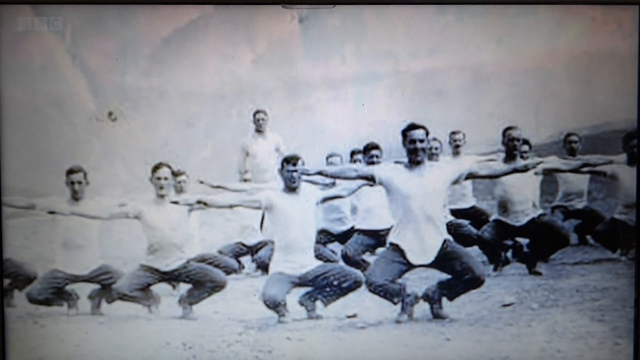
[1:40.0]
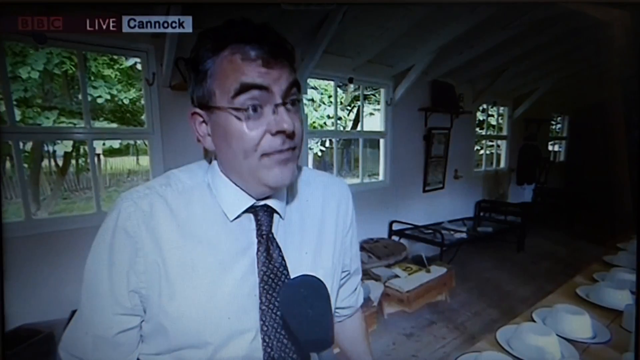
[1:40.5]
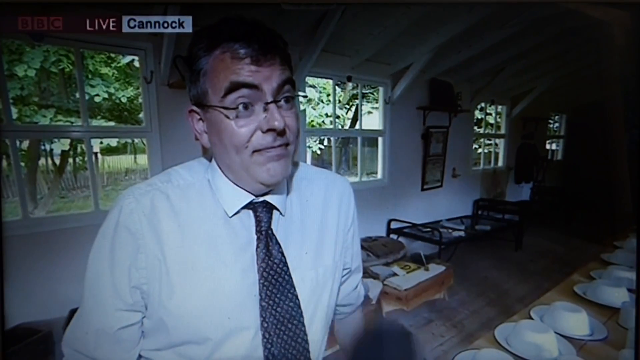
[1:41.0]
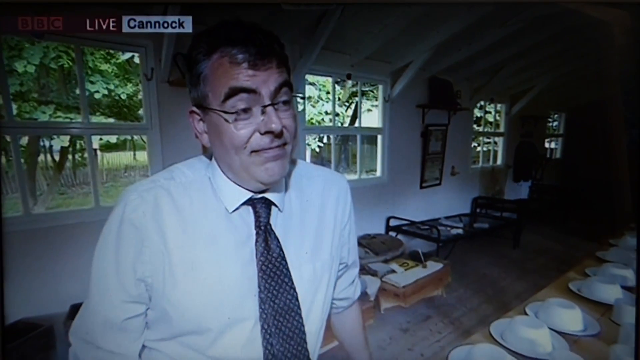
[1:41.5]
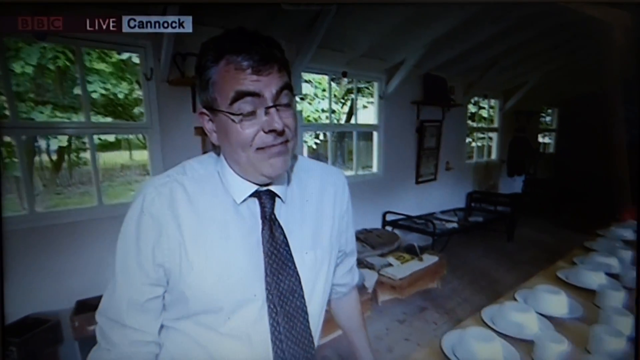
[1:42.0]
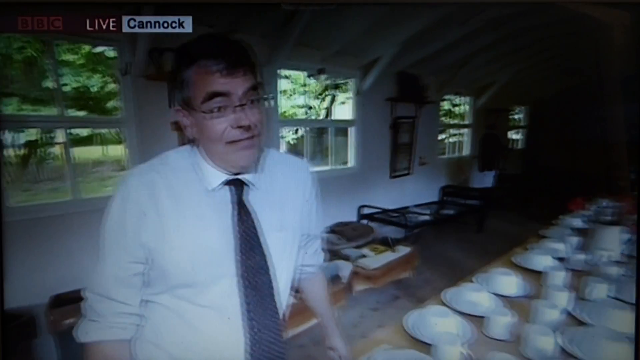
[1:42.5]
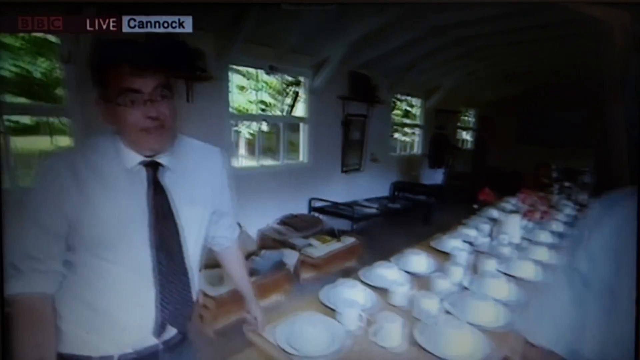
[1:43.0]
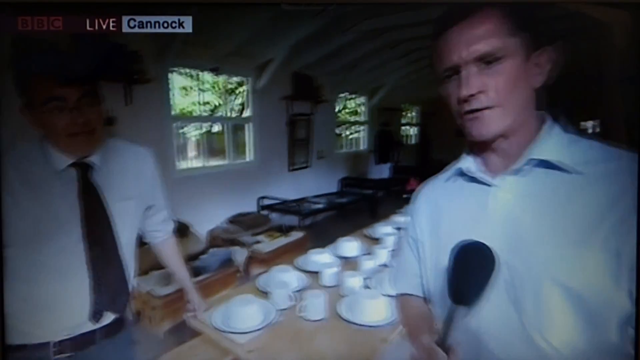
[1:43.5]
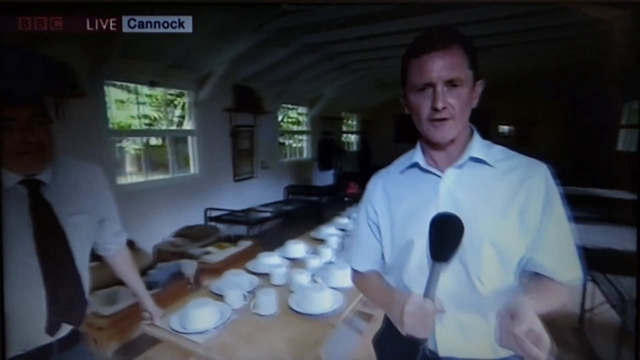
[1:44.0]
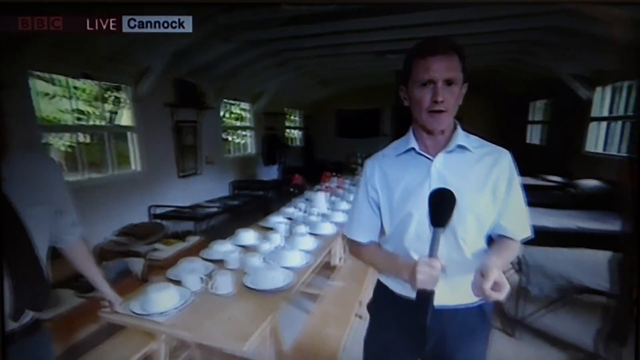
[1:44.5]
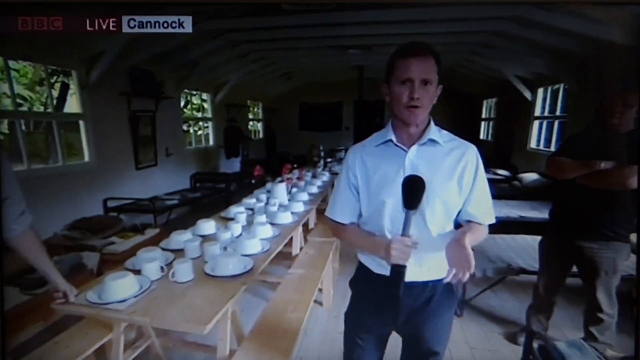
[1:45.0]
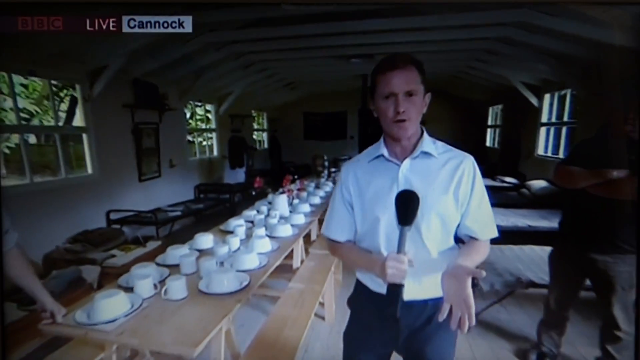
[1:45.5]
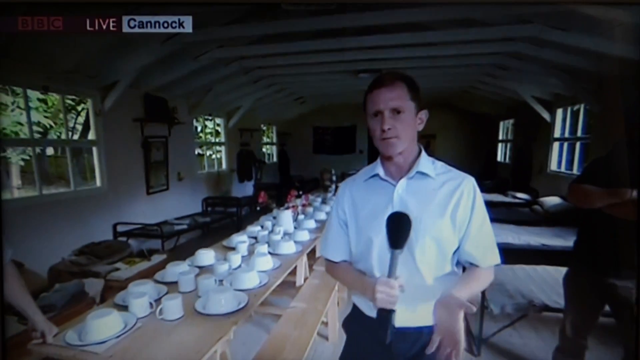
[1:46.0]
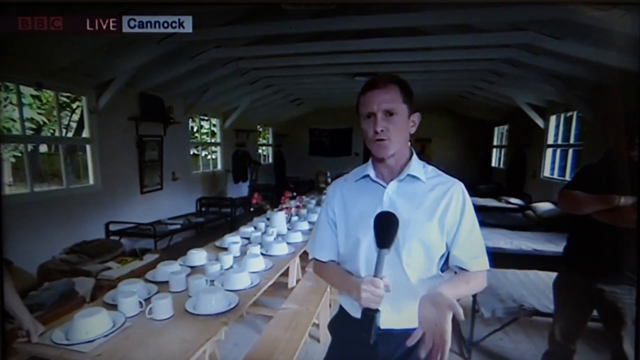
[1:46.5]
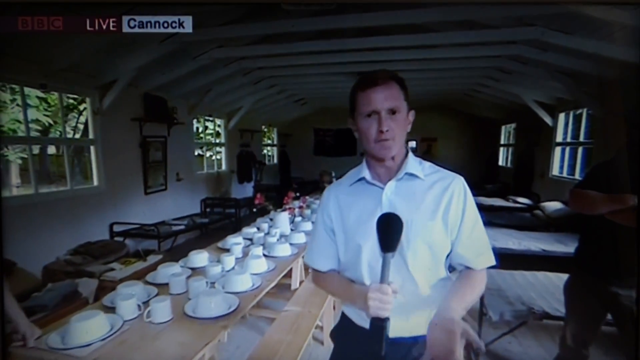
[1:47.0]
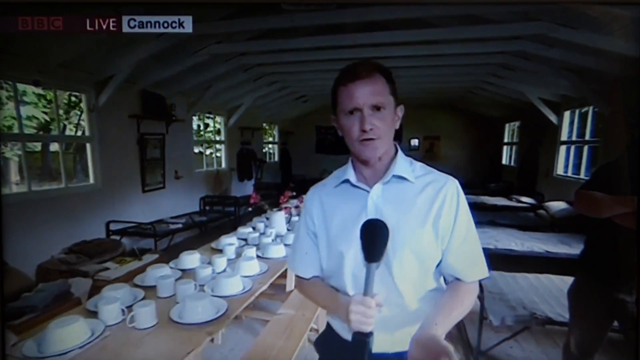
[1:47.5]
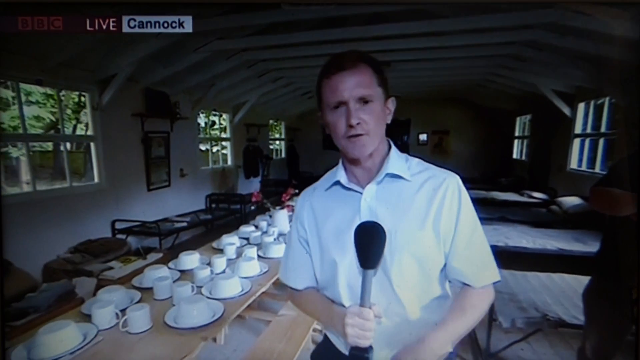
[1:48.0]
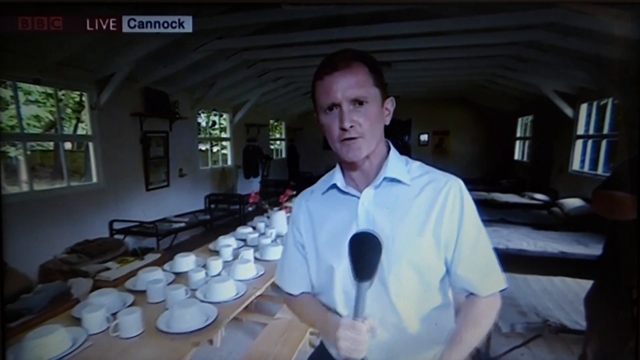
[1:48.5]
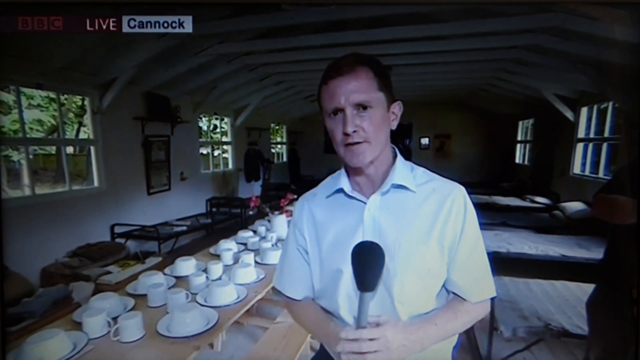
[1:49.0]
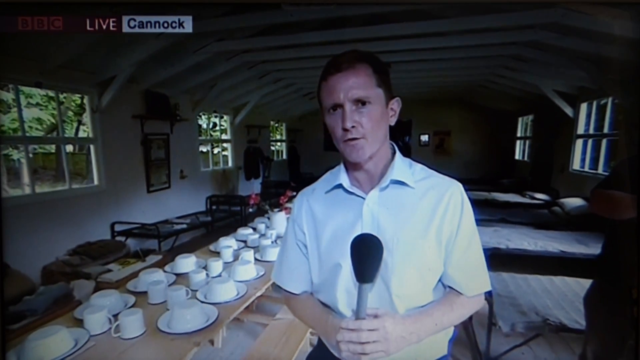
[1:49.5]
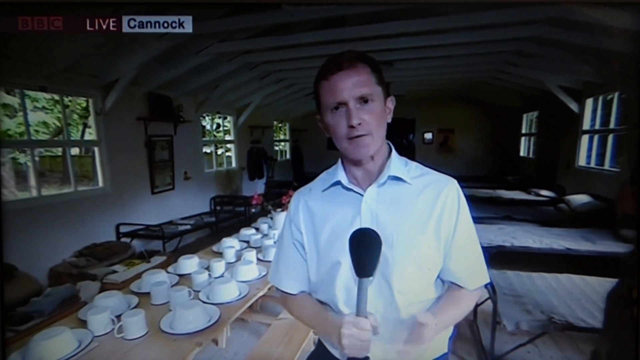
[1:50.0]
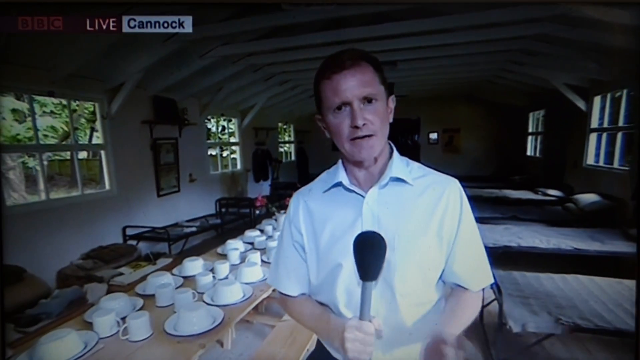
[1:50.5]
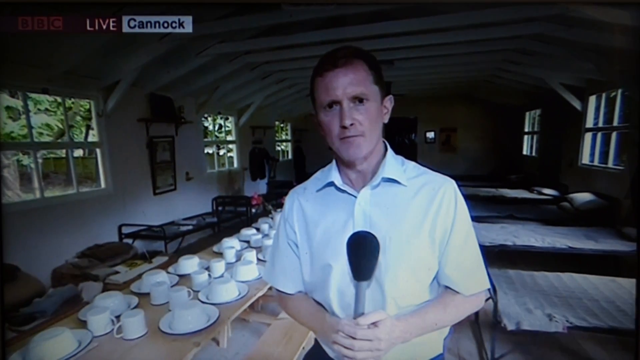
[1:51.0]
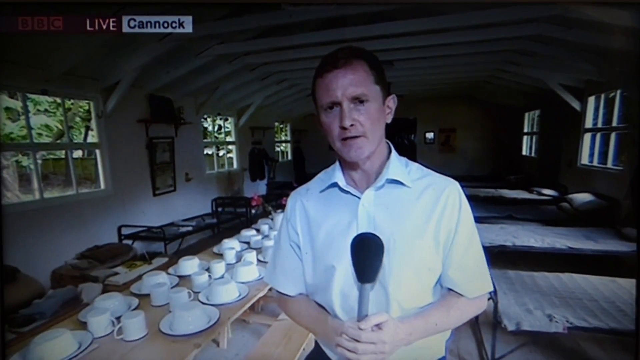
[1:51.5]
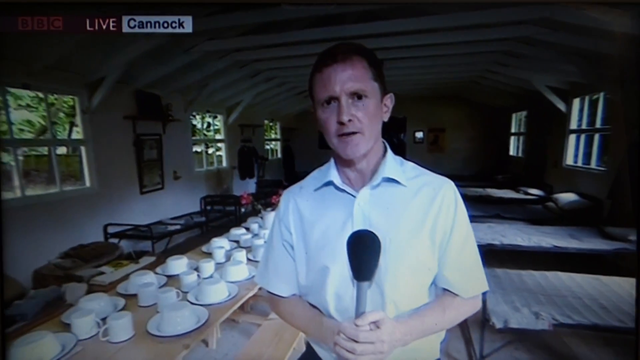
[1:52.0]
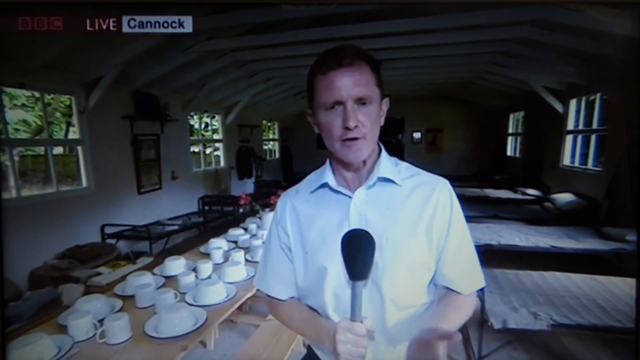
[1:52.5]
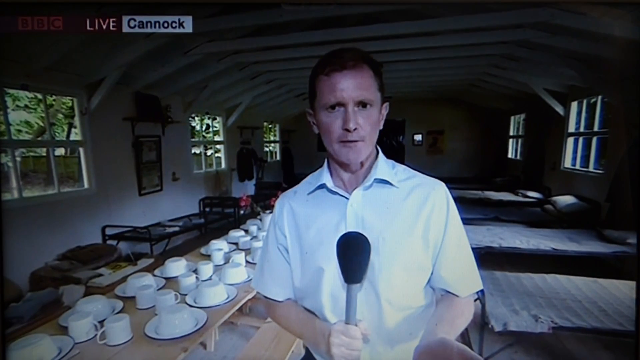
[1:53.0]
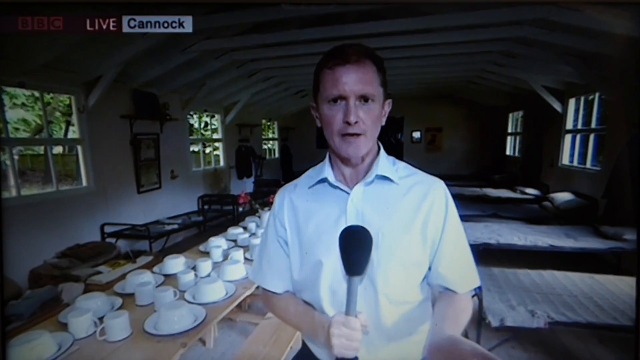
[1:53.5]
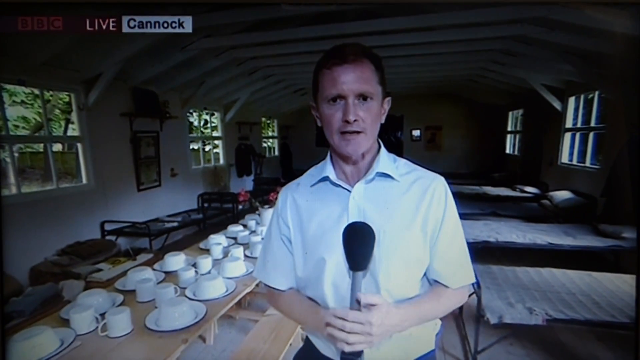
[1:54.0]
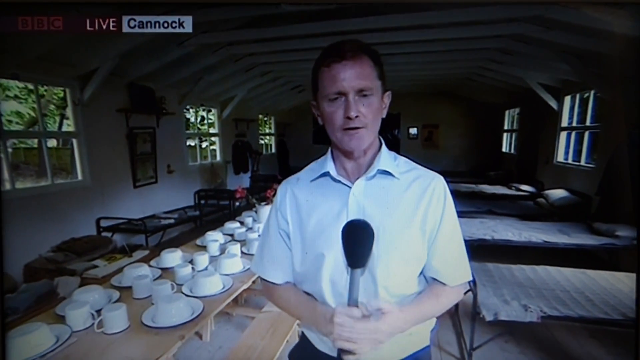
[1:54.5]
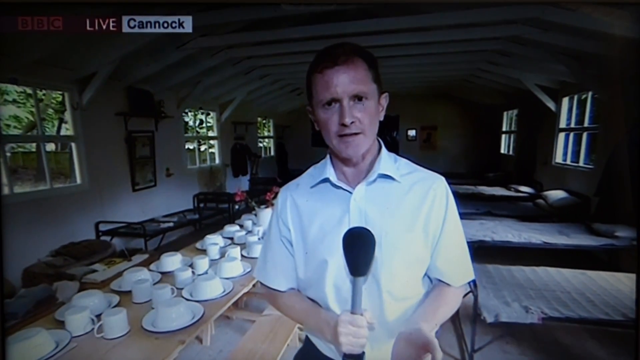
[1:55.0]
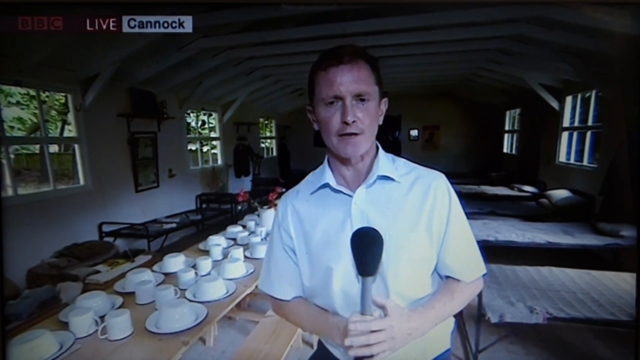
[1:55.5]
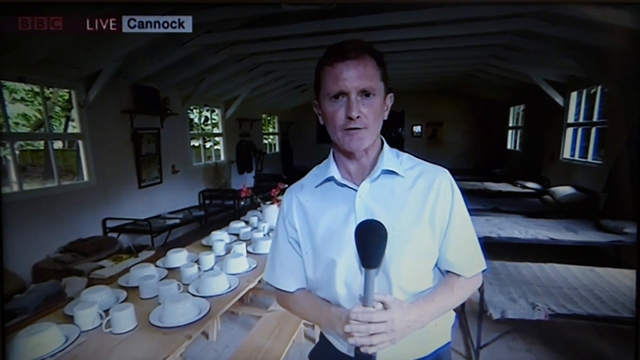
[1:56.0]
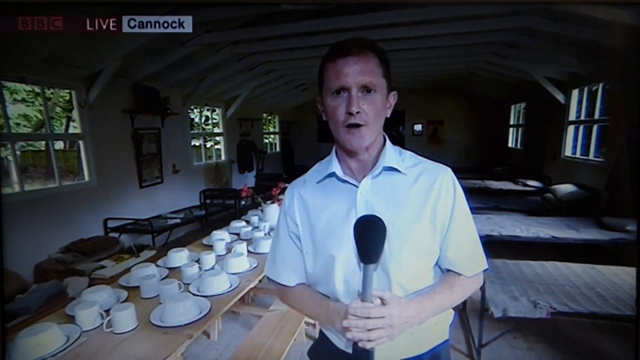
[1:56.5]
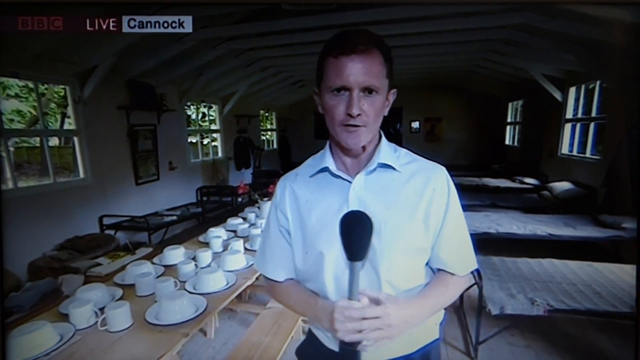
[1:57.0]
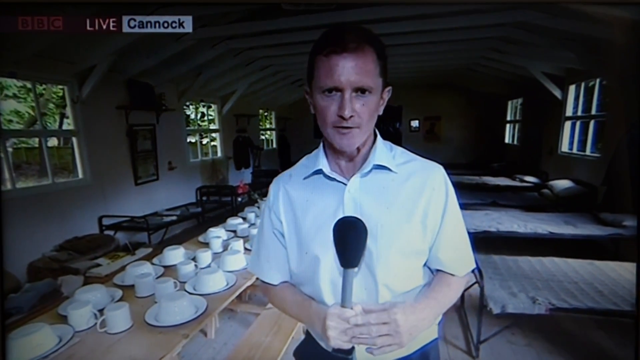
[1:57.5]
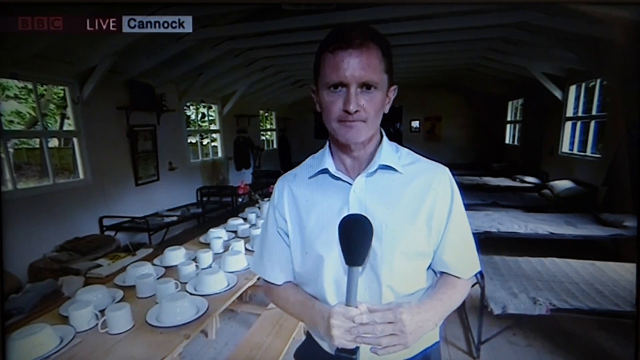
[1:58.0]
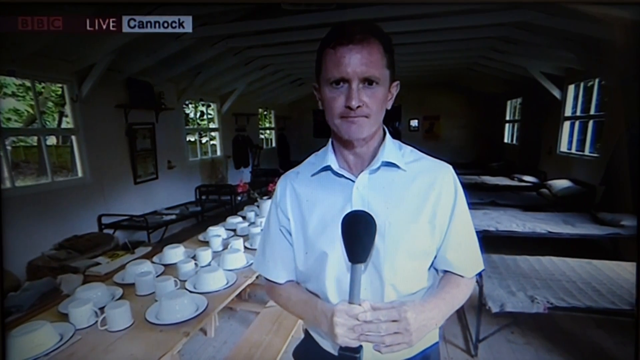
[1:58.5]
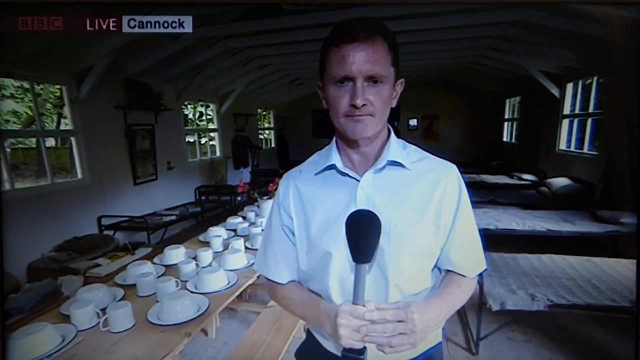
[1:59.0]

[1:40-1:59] A group photo of soldiers is shown, with more than 20 people in it.